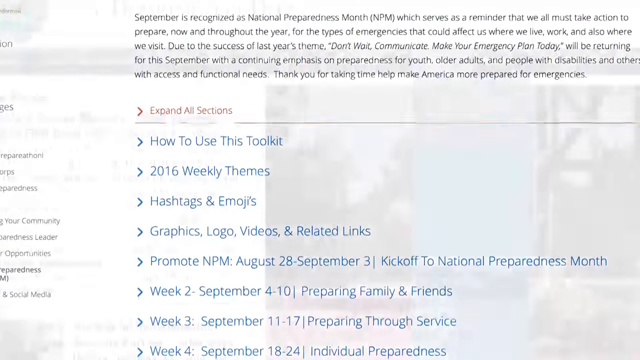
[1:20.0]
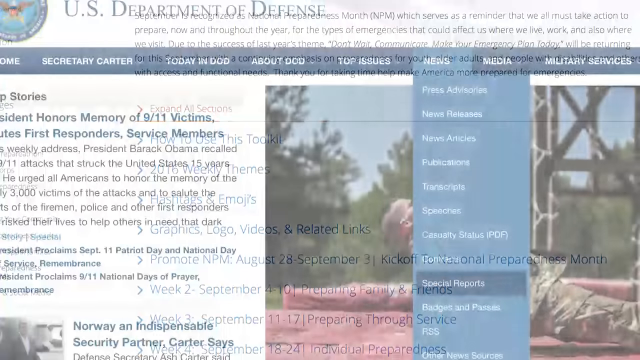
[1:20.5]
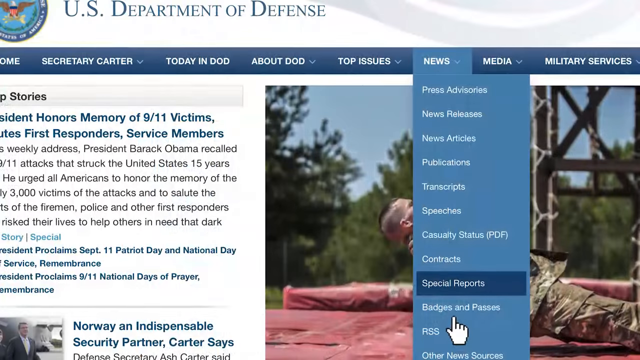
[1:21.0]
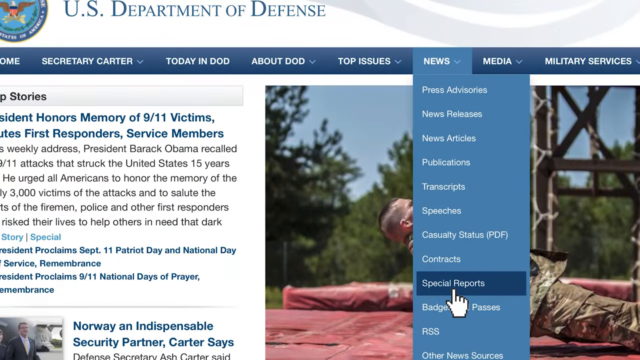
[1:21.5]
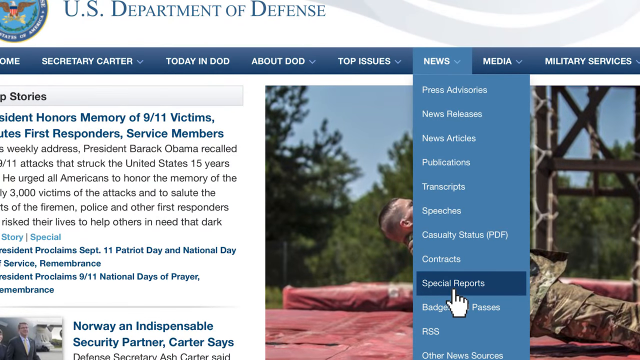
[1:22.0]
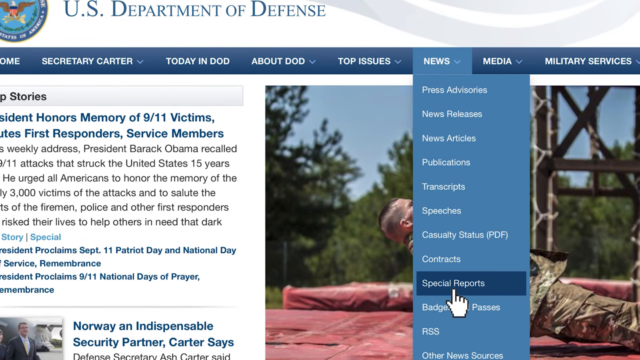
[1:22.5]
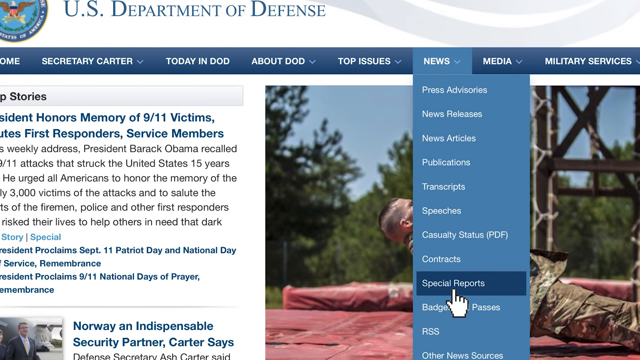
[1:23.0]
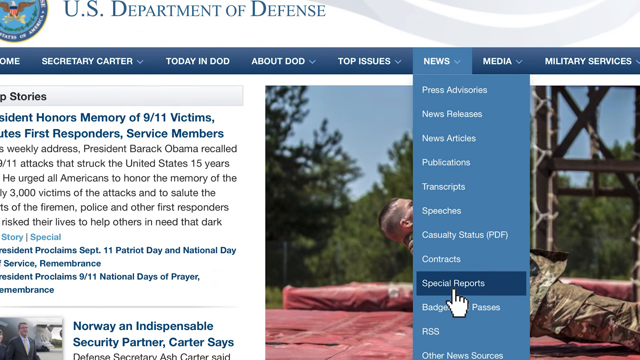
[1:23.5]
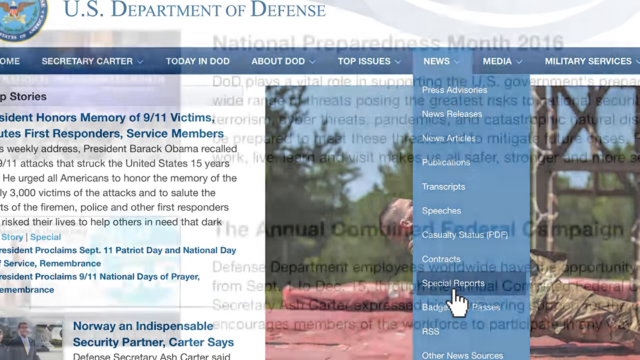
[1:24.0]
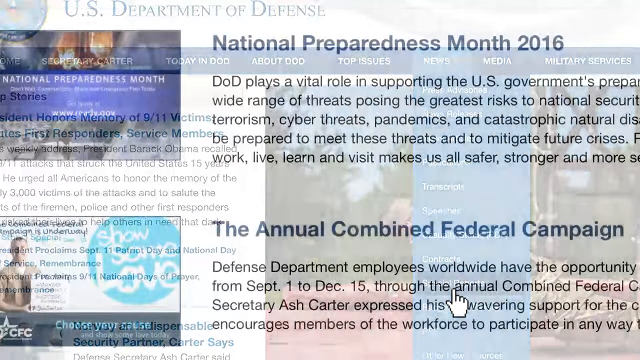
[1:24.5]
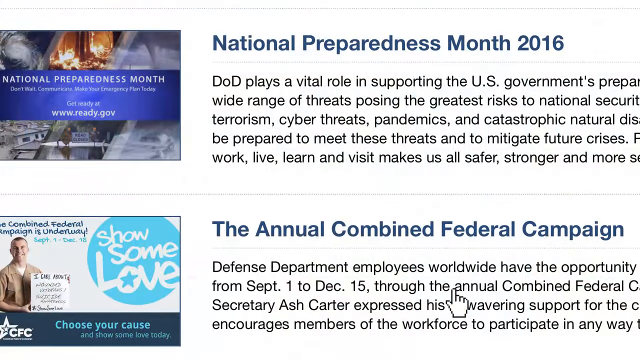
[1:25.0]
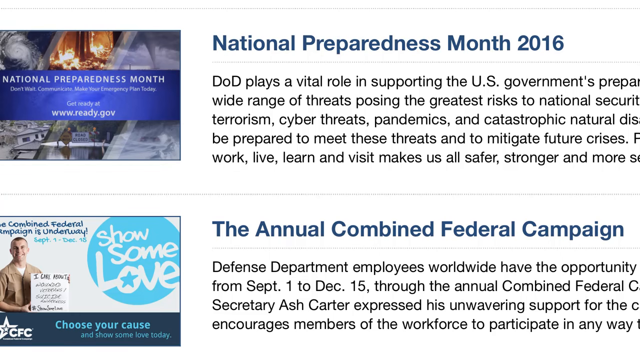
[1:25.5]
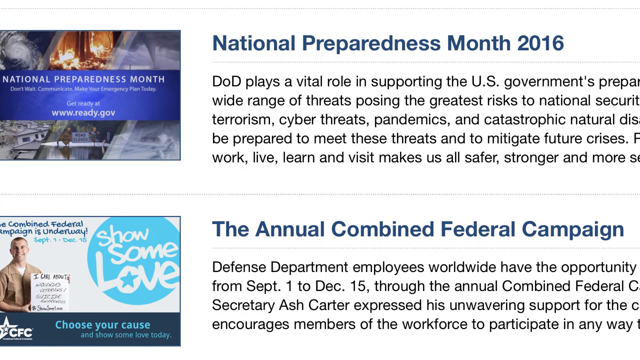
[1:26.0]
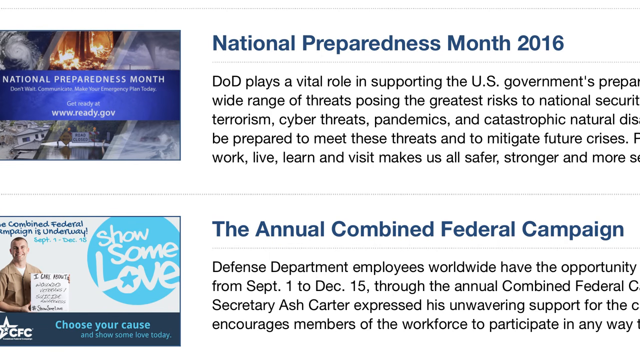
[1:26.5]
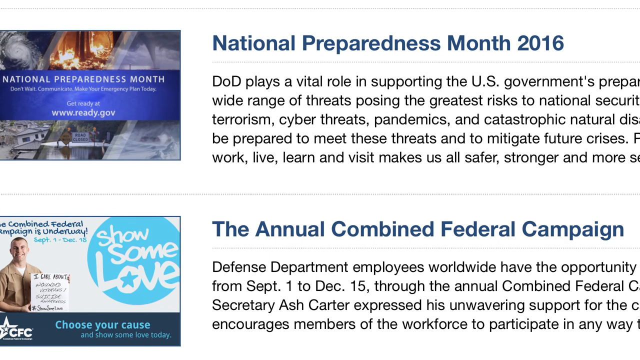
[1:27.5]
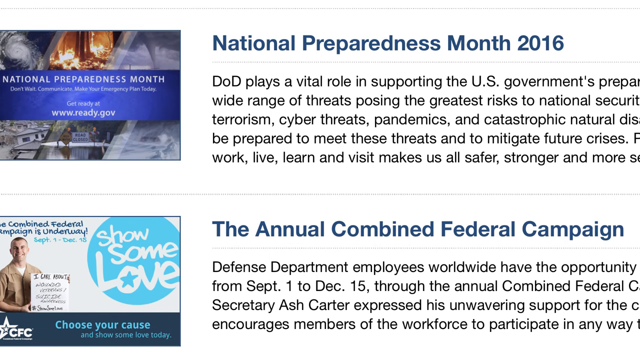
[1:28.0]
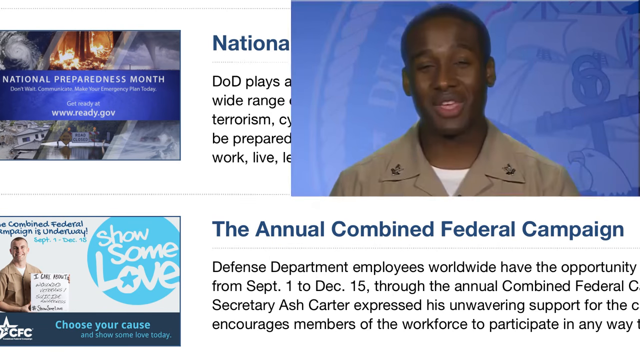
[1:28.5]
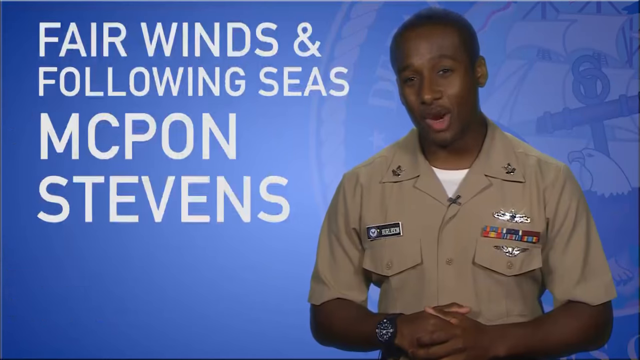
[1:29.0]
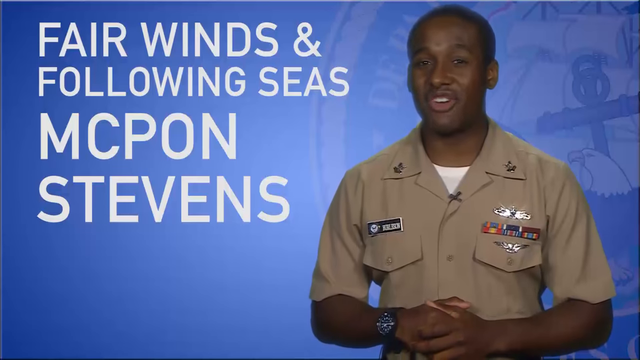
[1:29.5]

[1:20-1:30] The U.S. Department of Defense website is on screen, with a menu at the top reading "Home, Secretary Carter, Today in DoD, About DoD, Top Issues, News, Media, Military Services." The News section is highlighted, and the mouse is on "Special Reports." The menu also lists "Press Advisories, News Releases, News Articles, Publications, Transcripts, Speeches, Casualty Status, PDF, Contracts," along with some others below. The screen then changes to a very zoomed-in part of a website that looks like it has two different articles: "National Preparedness Month 2016" on top and "Annual Combined Federal Campaign" below it.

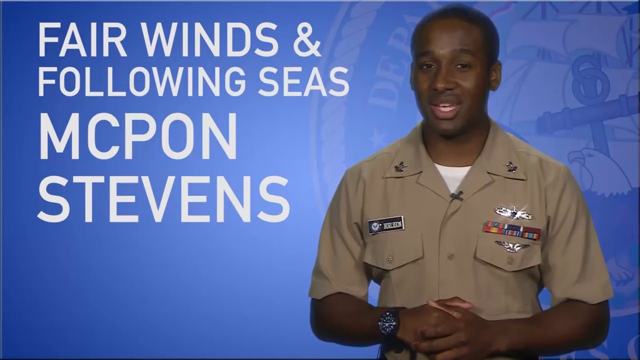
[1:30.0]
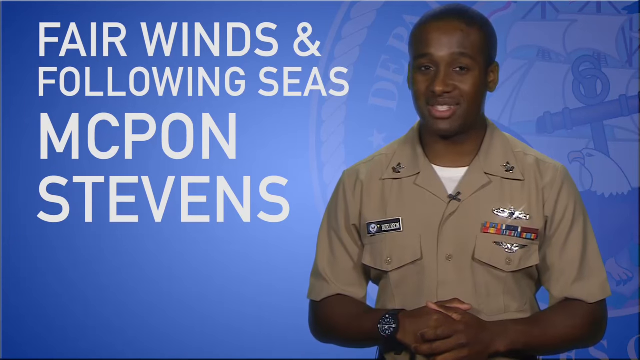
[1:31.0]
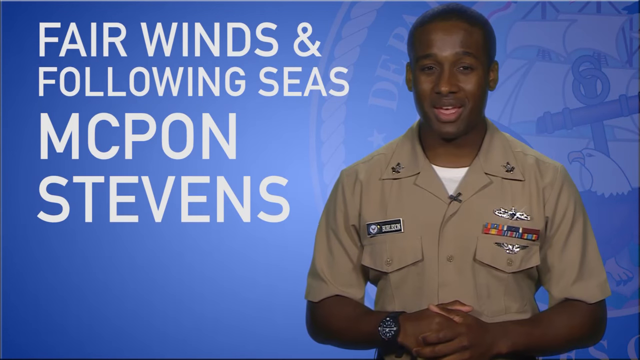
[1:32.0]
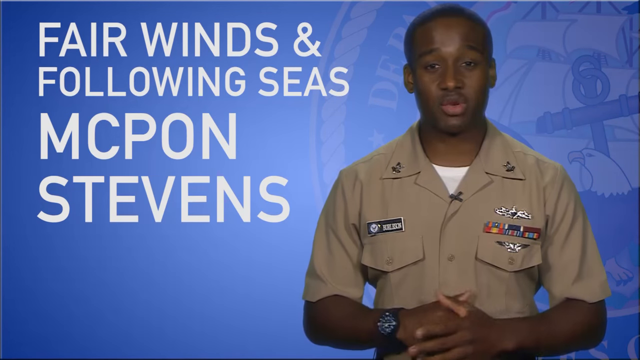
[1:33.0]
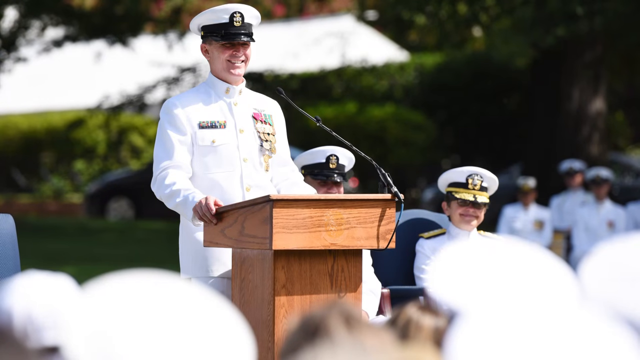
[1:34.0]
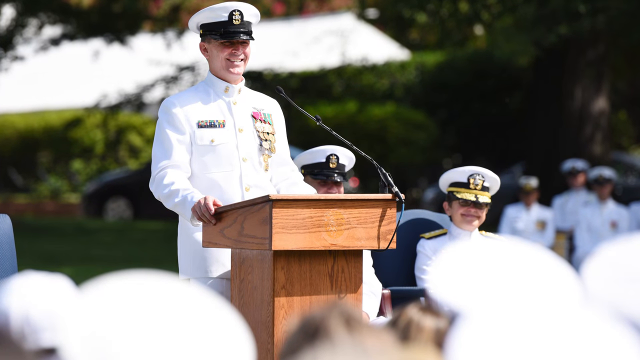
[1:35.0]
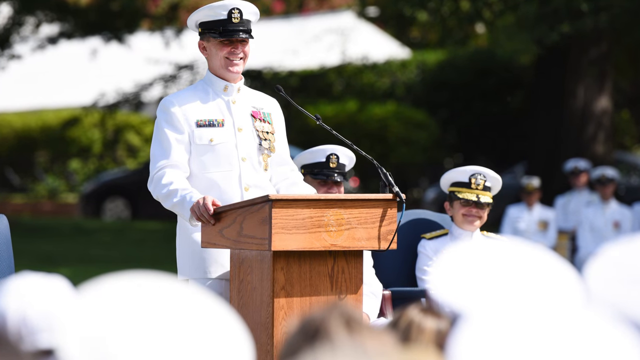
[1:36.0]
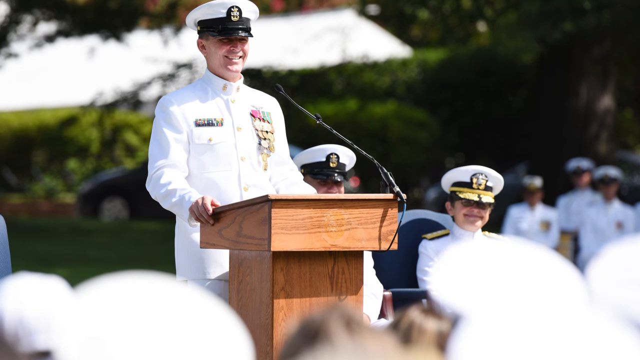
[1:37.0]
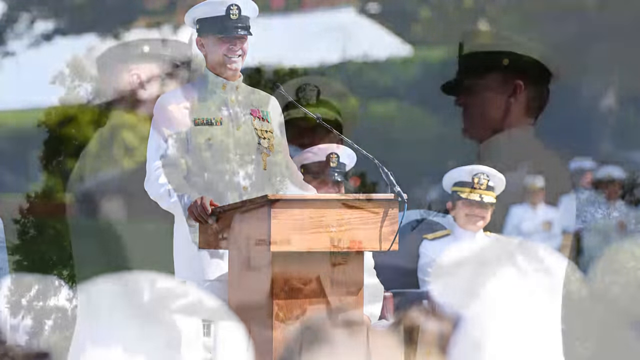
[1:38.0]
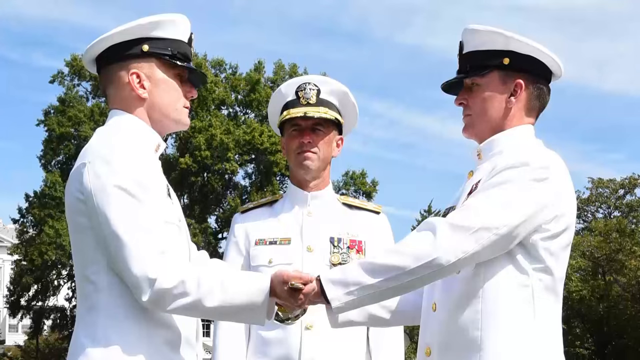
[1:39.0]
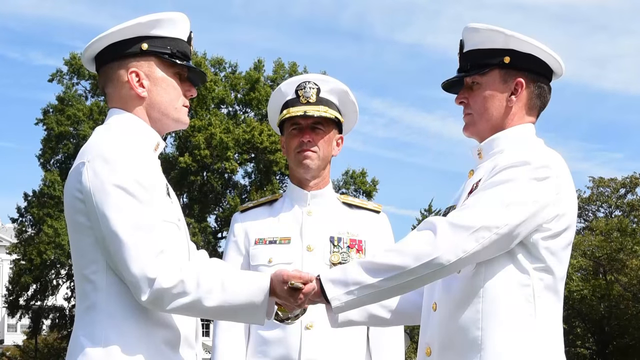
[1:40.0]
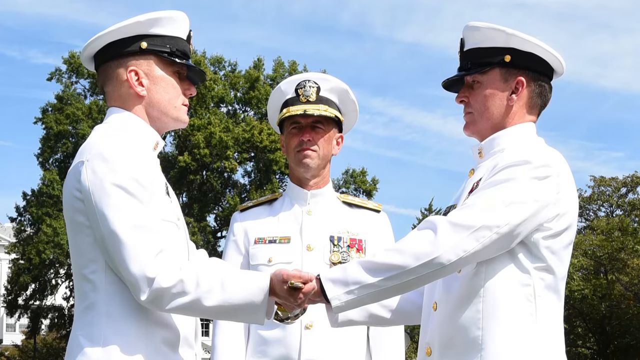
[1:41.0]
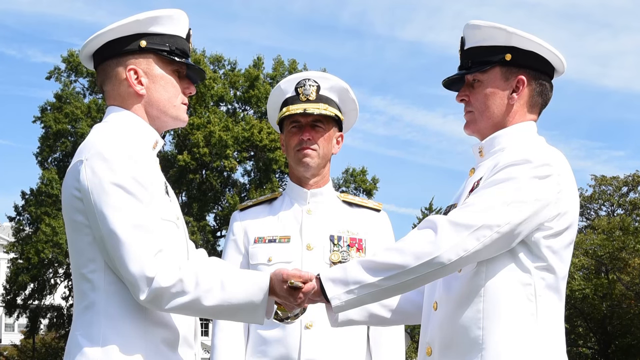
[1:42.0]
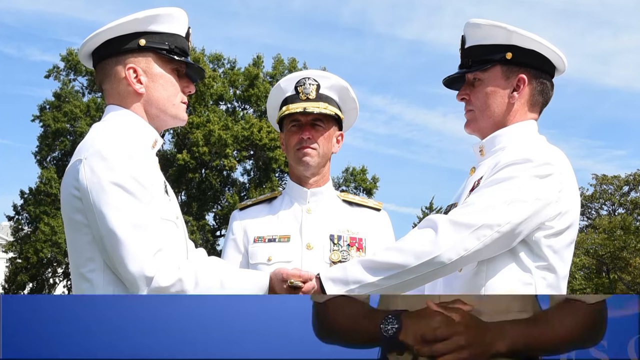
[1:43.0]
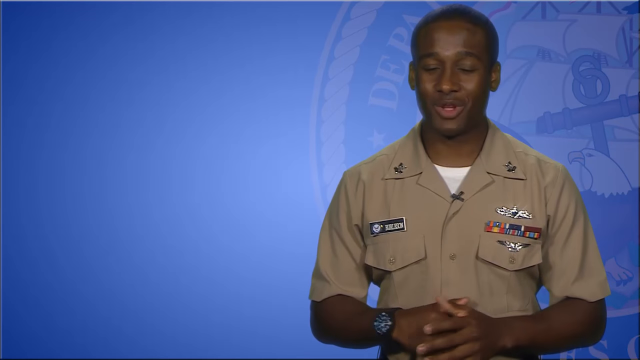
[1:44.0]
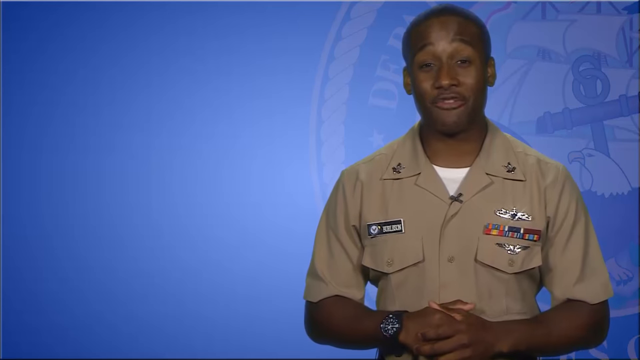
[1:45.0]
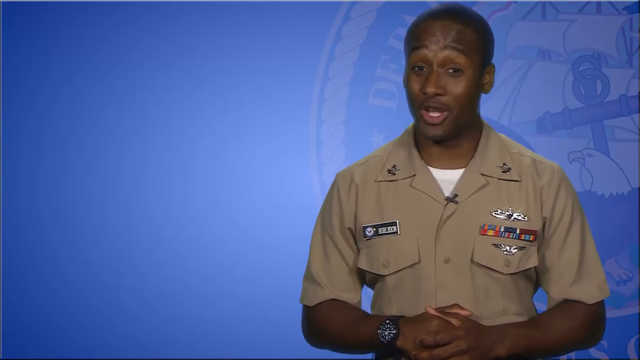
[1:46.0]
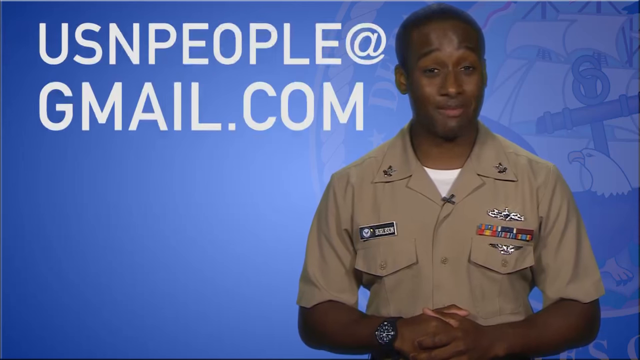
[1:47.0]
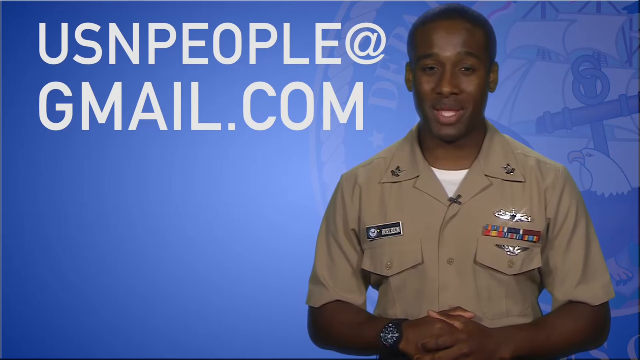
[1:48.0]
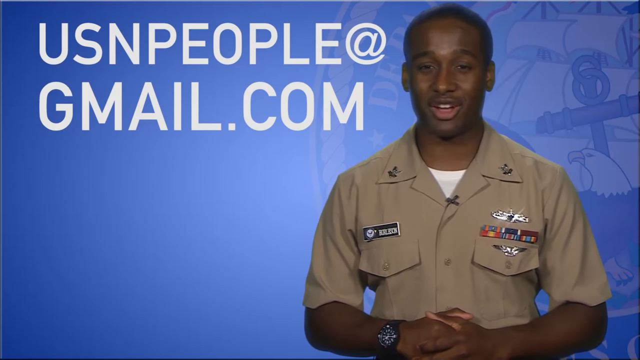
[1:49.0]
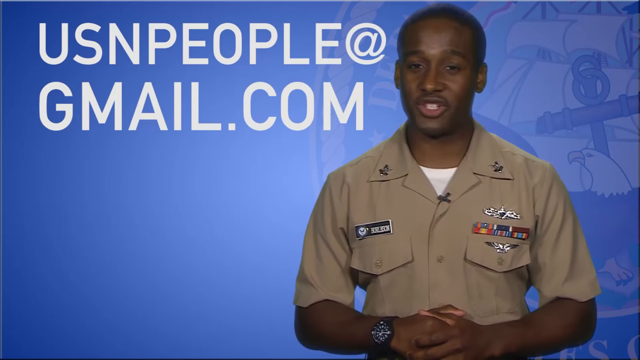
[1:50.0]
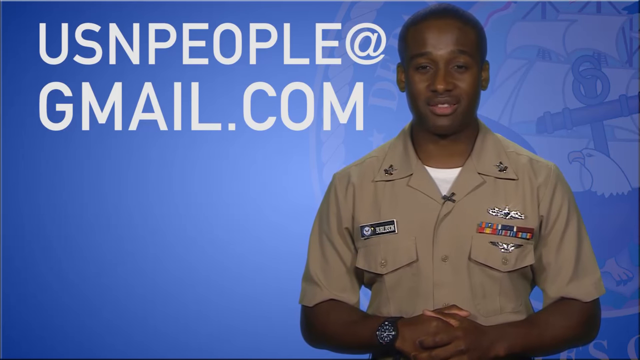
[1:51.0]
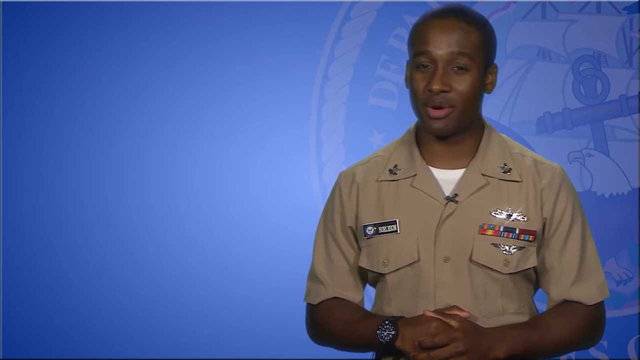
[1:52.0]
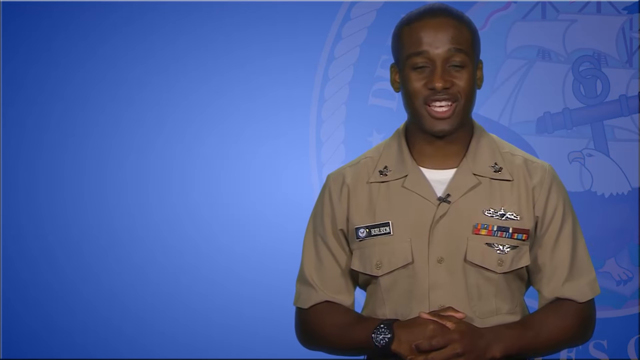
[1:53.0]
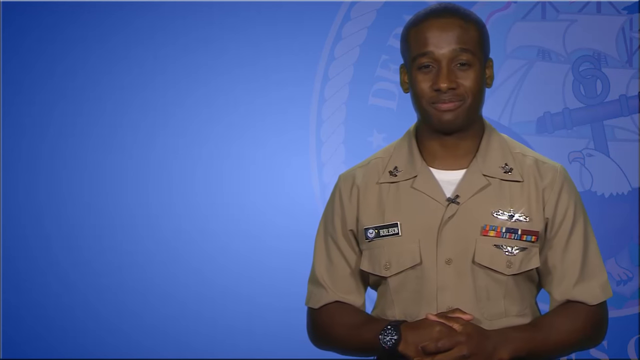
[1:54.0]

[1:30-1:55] A Navy sailor in his uniform is on the right side, in front of a blue background screen with a light Department of Defense logo apparently behind it. White text appears on the left side. The scene changes to a still photograph of a man in white uniform, possibly a Navy officer, wearing all white with a lot of decorations, at a podium. A different photograph then comes up showing three men who look like officers and look pretty high ranking. The video comes back to the sailor at the blue screen, and text on the left reads "USN people at gmail.com." The sailor talks throughout. At the end, the white text disappears, leaving just the blue background, and he finishes talking.